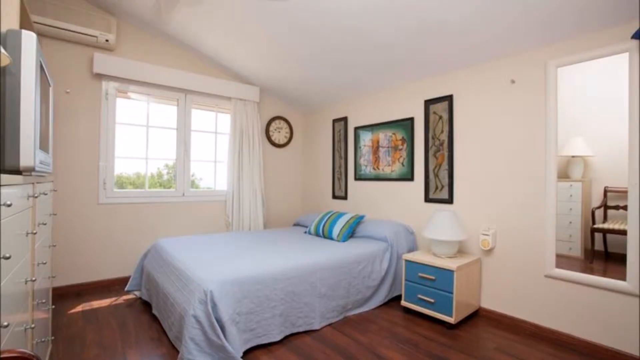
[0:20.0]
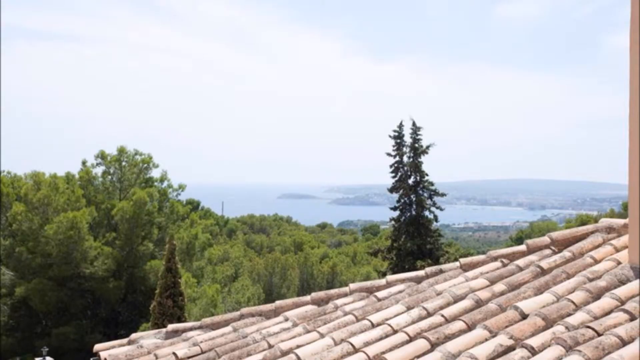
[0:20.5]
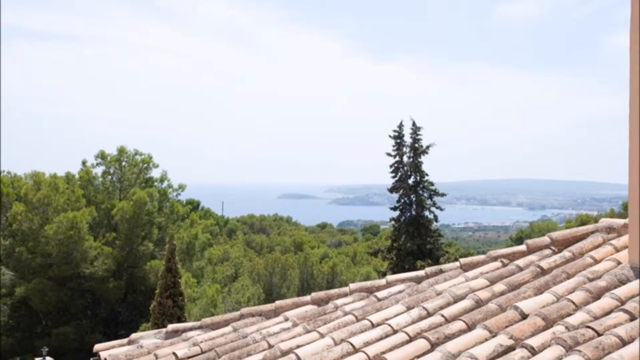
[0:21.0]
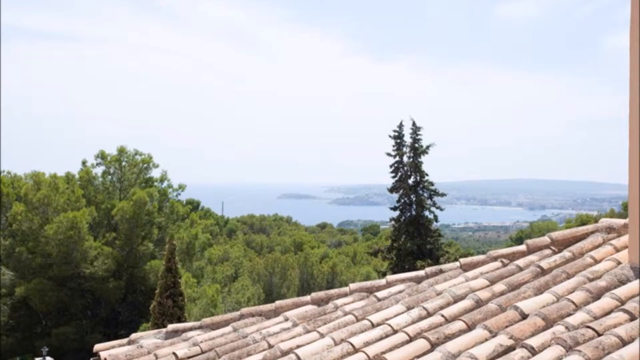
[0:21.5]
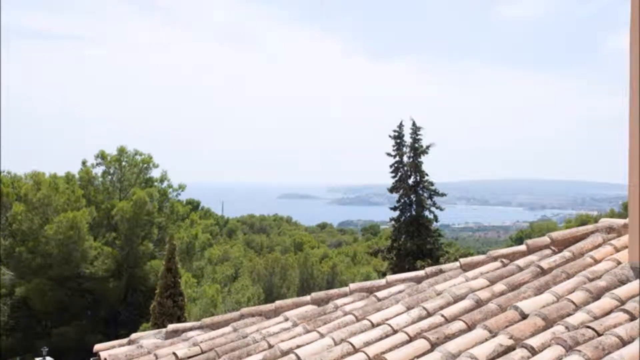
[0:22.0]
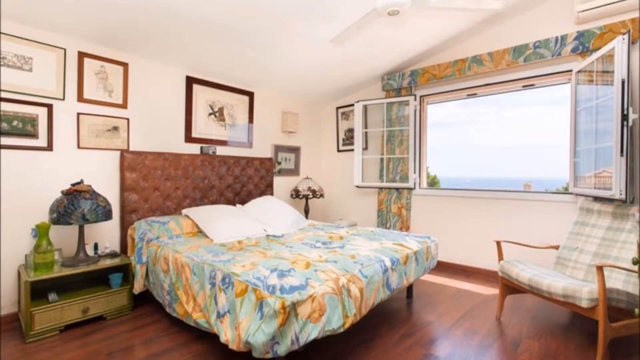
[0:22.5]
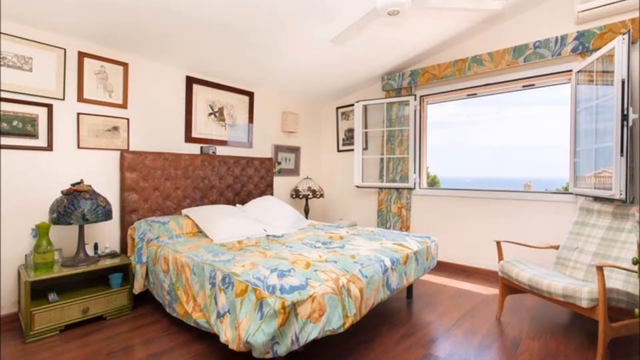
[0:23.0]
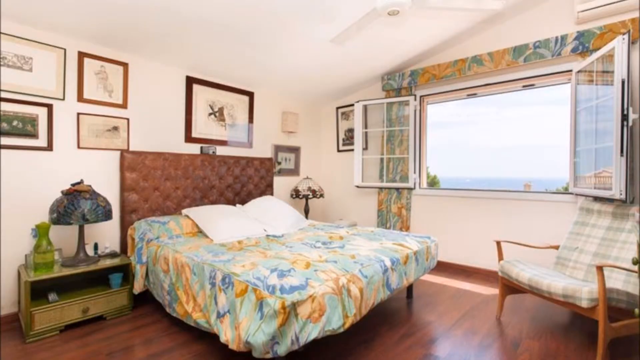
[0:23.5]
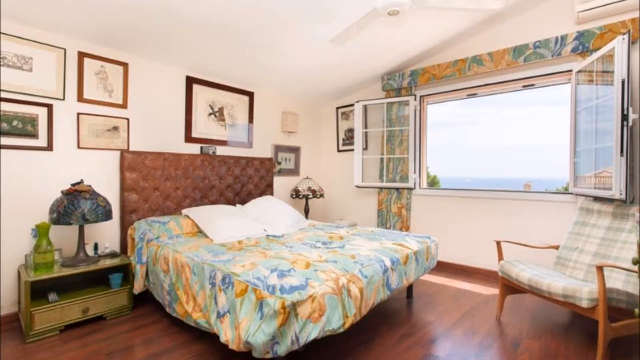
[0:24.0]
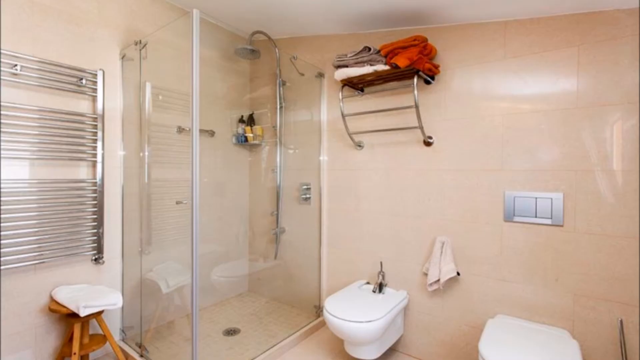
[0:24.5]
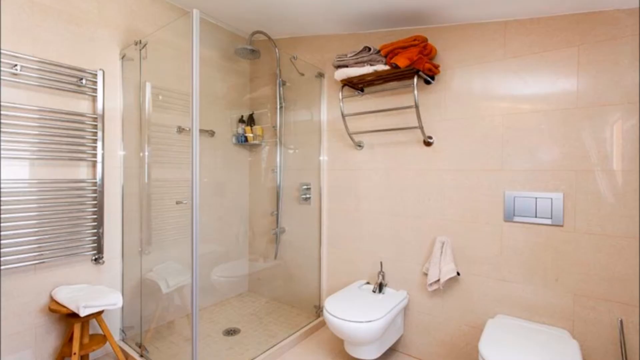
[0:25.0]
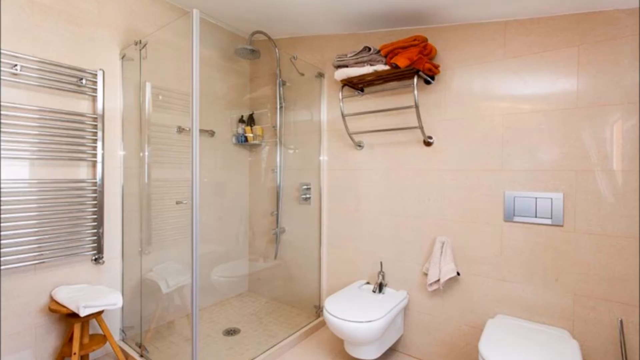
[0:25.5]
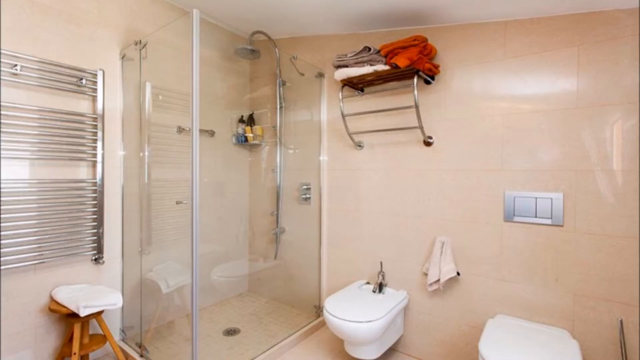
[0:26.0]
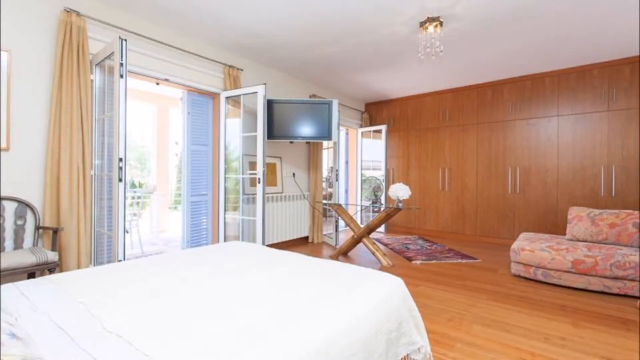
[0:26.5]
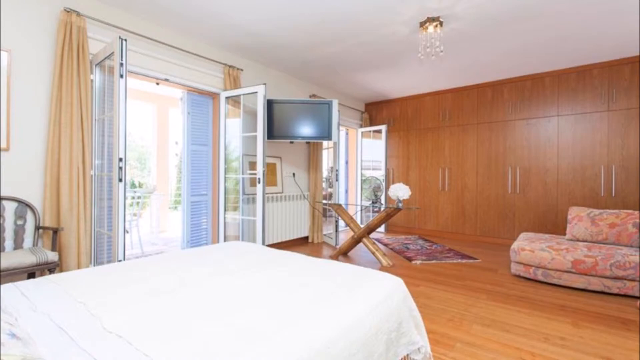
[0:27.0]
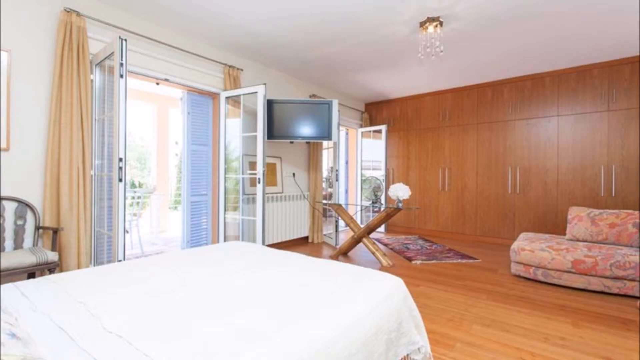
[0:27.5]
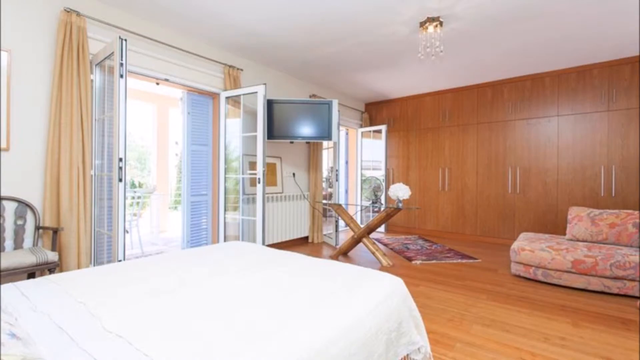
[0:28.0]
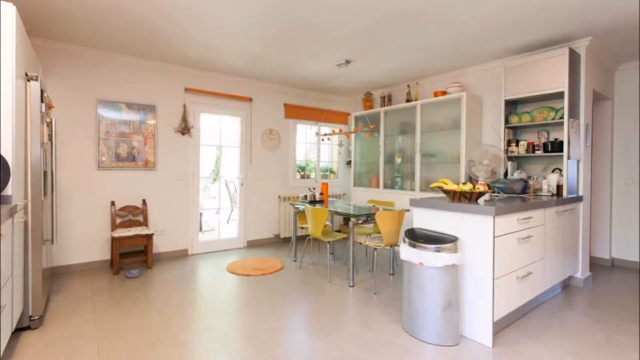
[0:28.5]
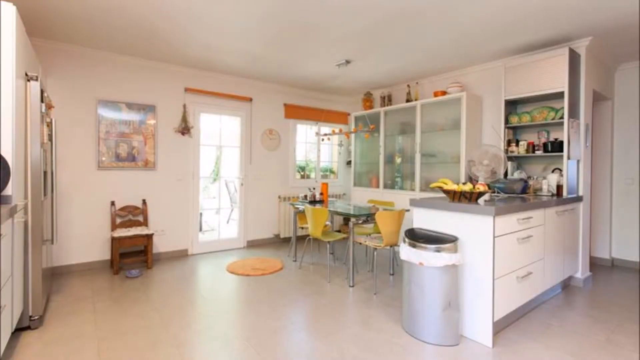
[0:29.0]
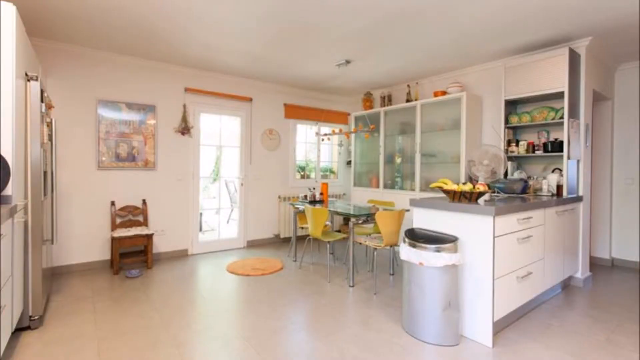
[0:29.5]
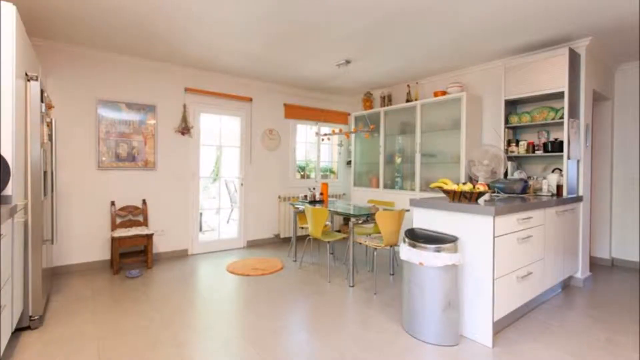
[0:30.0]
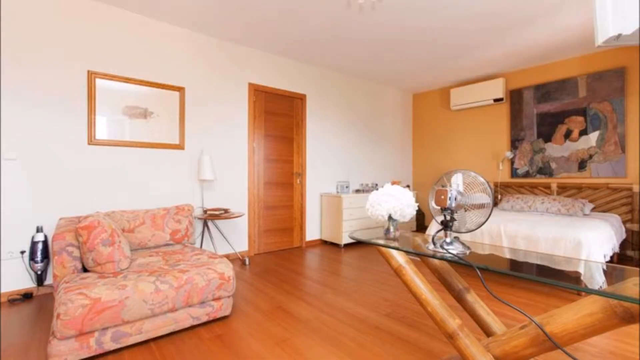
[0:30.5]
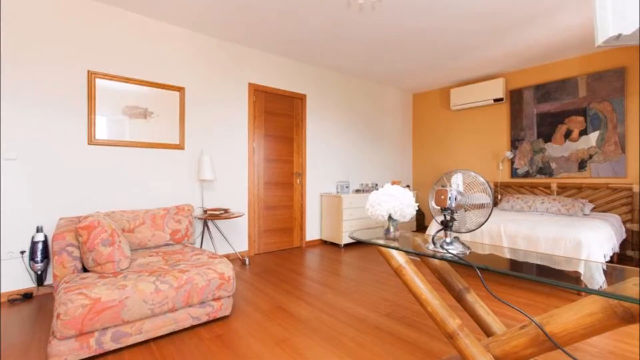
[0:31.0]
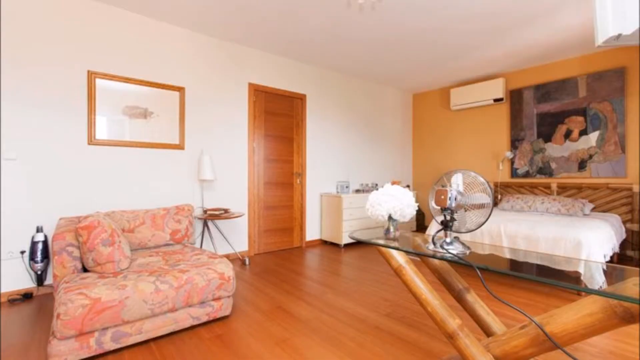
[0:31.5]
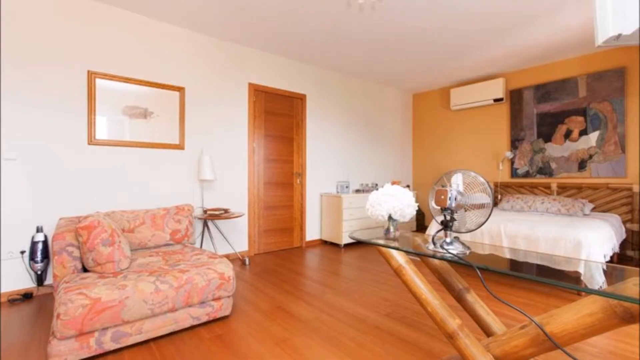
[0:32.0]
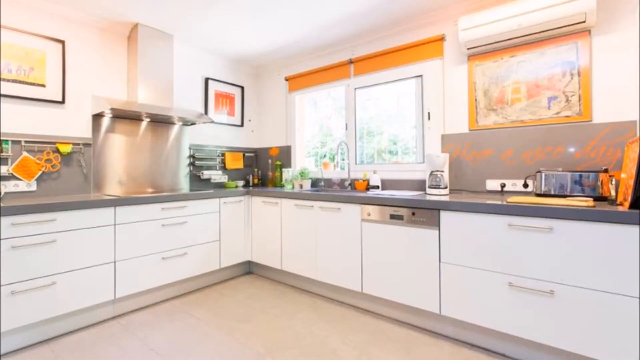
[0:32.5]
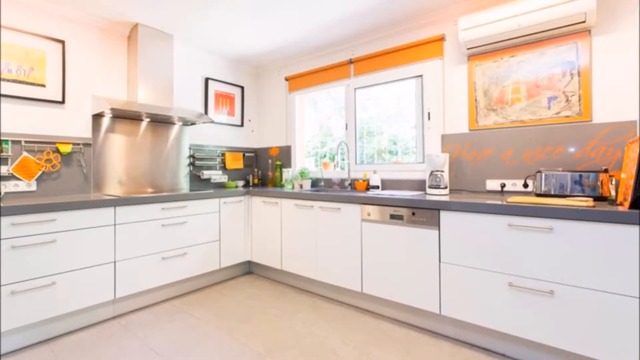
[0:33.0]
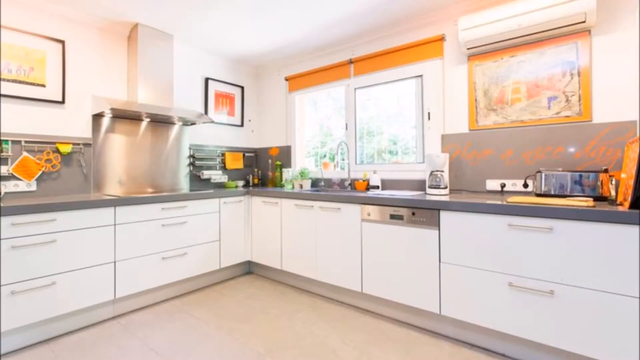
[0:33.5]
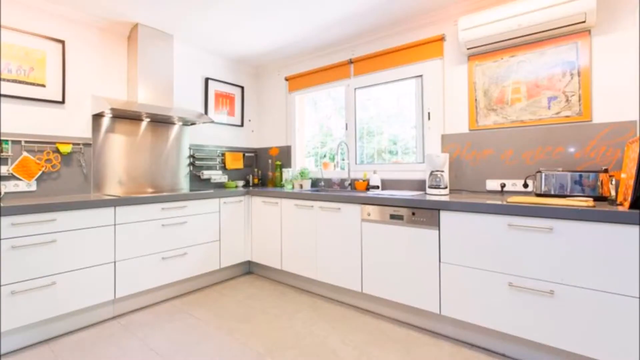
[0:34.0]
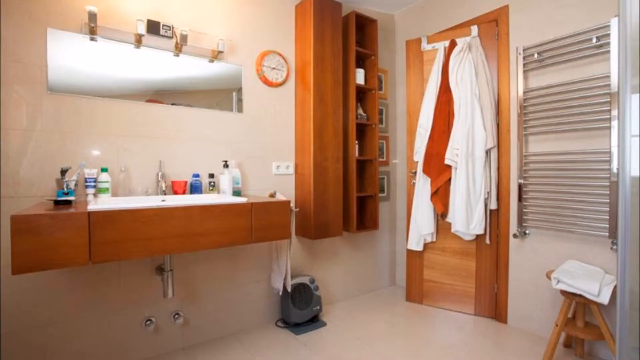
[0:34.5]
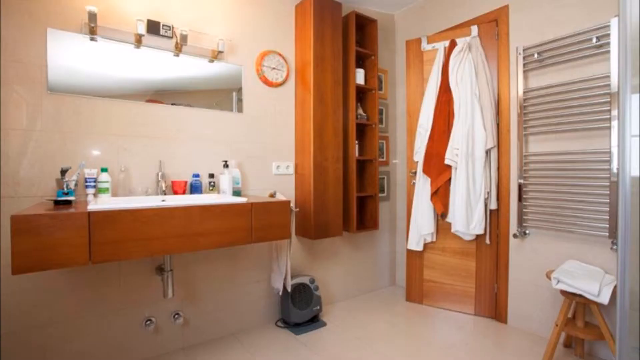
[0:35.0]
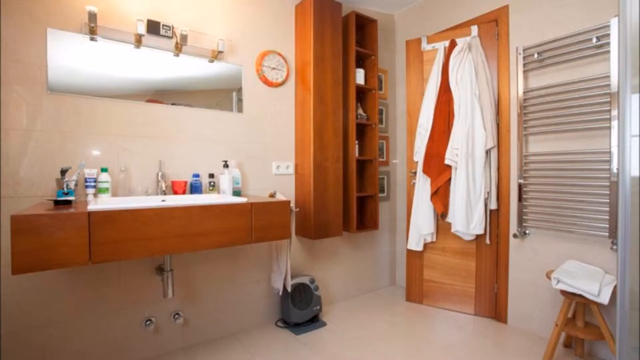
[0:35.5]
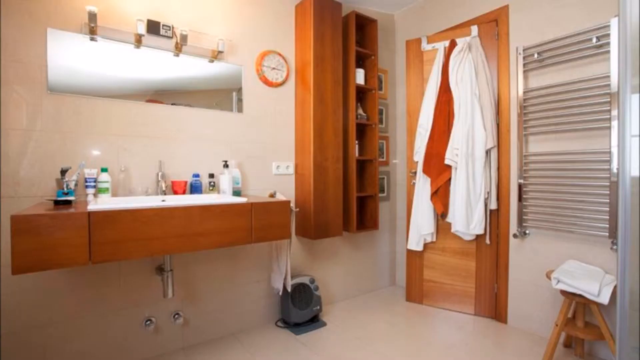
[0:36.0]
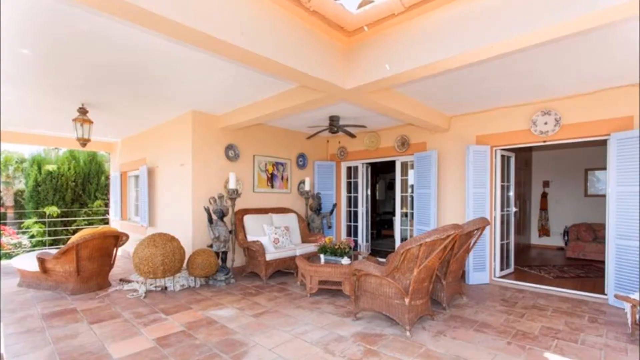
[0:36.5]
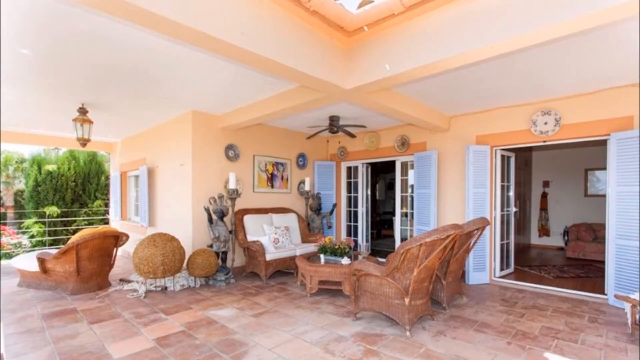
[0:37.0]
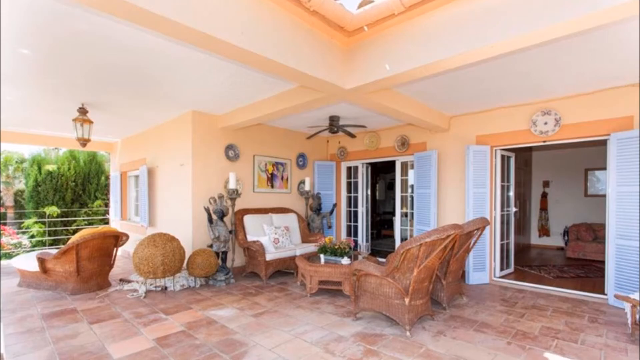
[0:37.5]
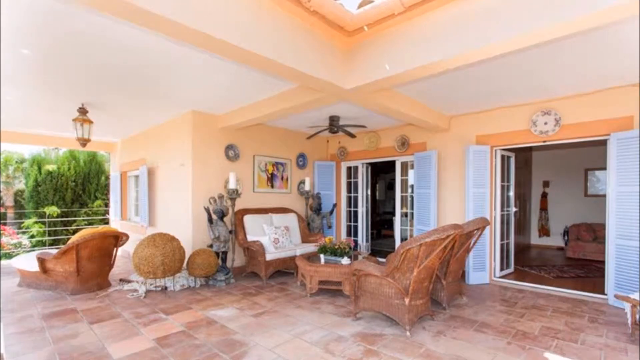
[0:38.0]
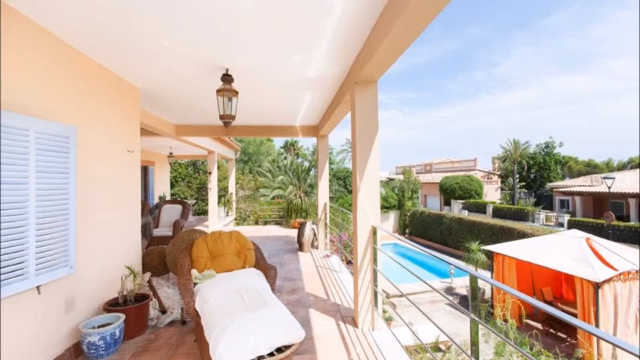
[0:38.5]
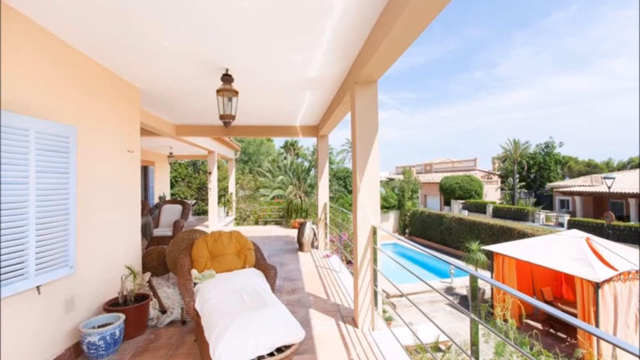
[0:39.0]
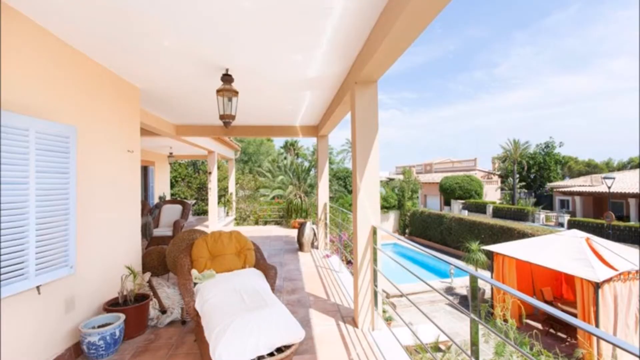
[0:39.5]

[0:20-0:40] The scene changes to a view taken from a rooftop: treetops are off in the distance, what looks like a mountain range is far off in the distance on the right side, and a brown roof is at the bottom. Next is a bedroom with a large bed in the middle. To the right is a very long and wide window that is open, a nightstand with a lamp on it is next to the bed to the left, and a chair is to the right side. The inside of a bathroom follows, with the toilet at the bottom center and a walk-in shower to the left side. The scene then changes to a very large room with a bed at the bottom left and a TV mounted on the wall in the upper center. What looks like a kitchen follows, with a trash can to the right, a door to the left of center, and a small table for eating to the right of center. Next is a bedroom with a chair or a couch to the left side, a bed to the right side against the wall, and a wooden door in the center, and then the scene changes to a kitchen.